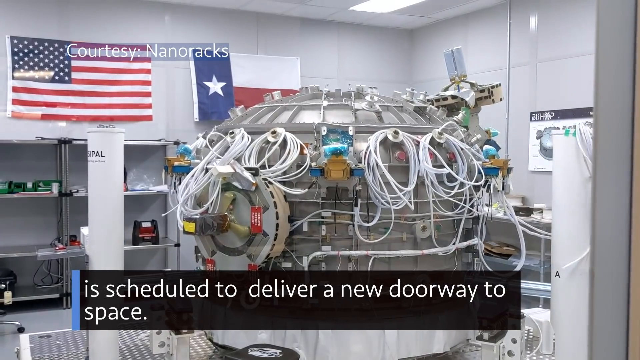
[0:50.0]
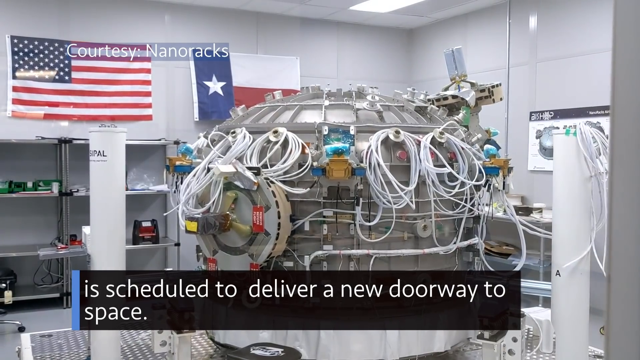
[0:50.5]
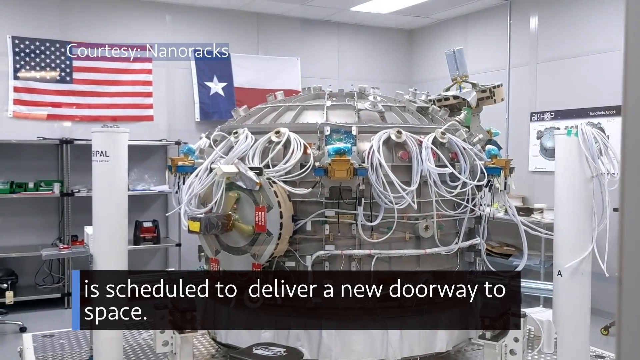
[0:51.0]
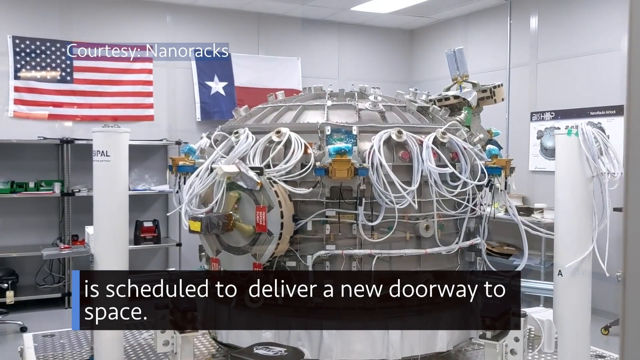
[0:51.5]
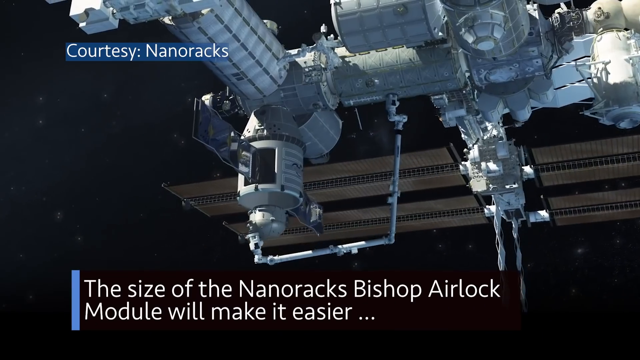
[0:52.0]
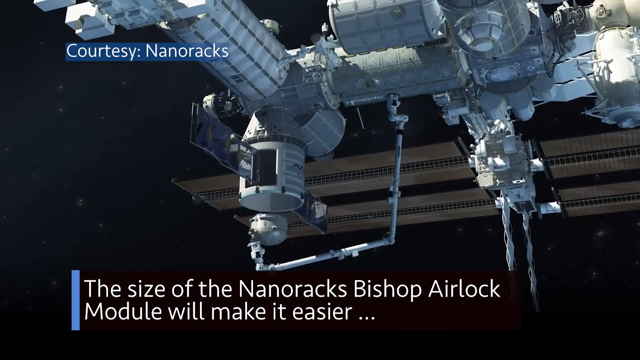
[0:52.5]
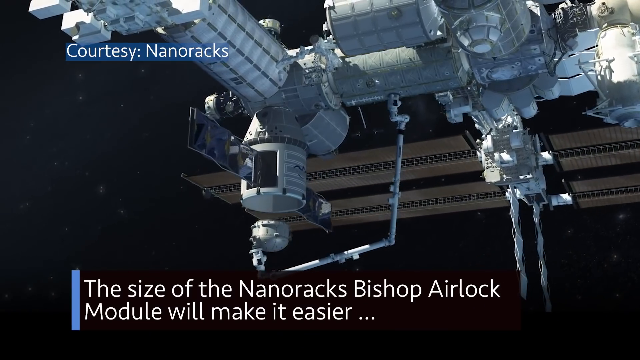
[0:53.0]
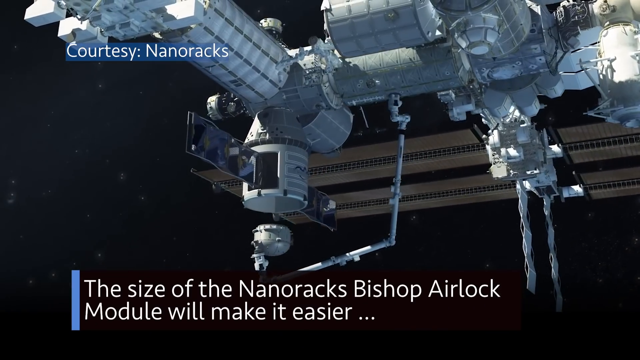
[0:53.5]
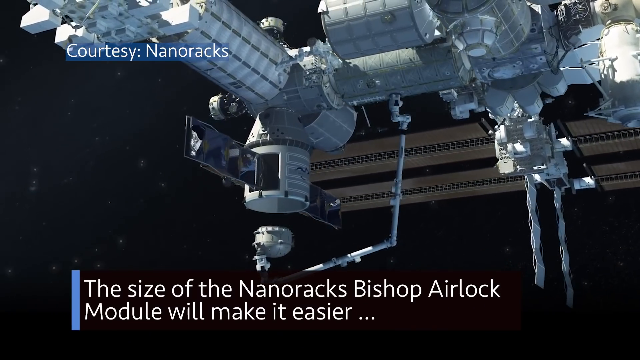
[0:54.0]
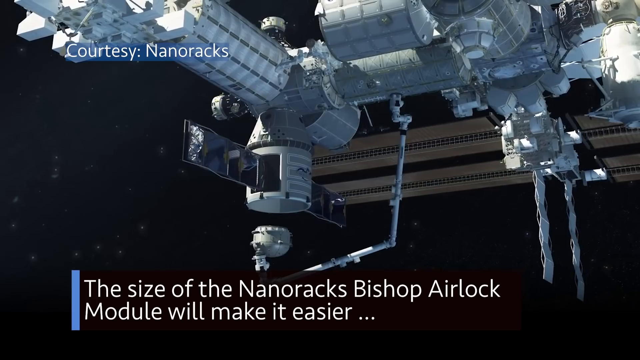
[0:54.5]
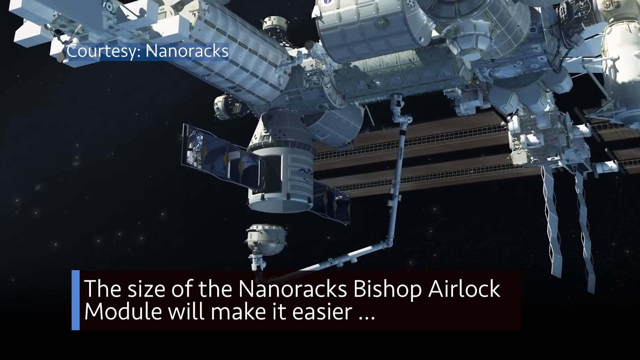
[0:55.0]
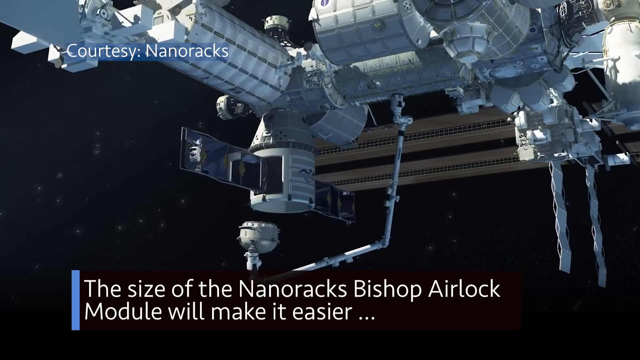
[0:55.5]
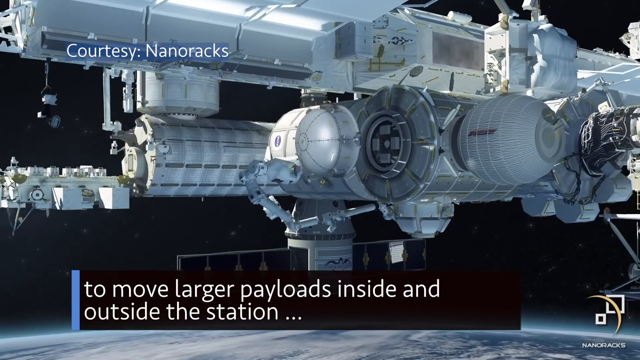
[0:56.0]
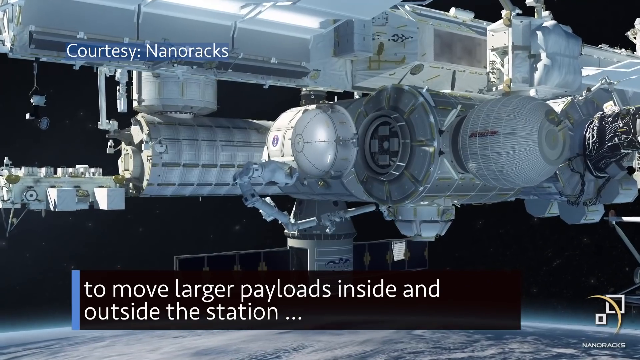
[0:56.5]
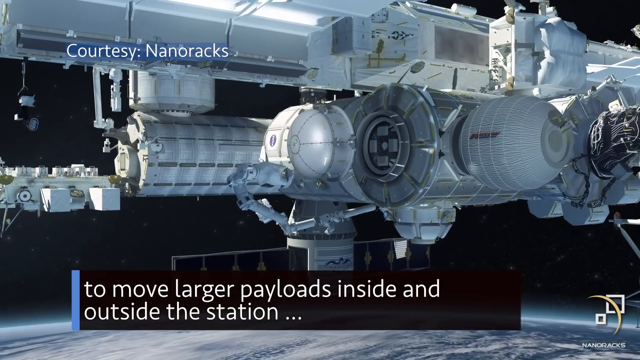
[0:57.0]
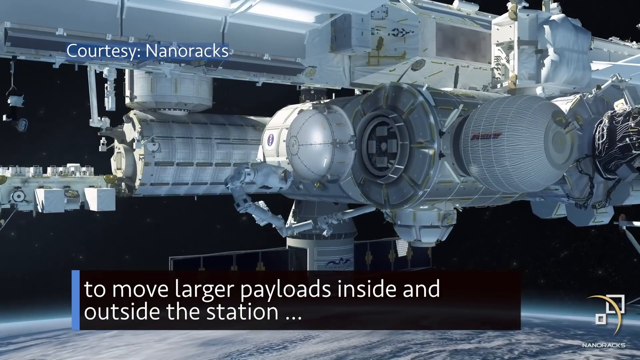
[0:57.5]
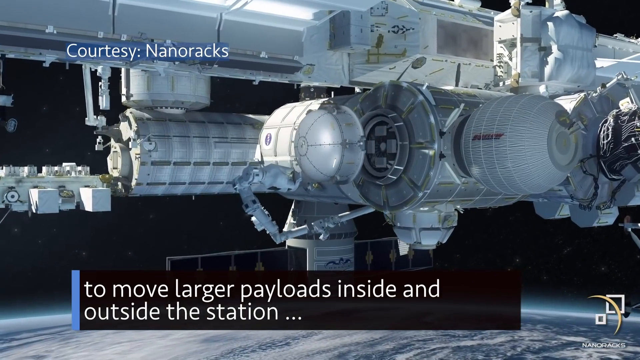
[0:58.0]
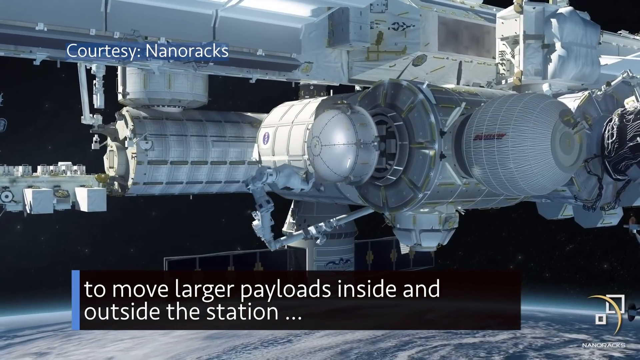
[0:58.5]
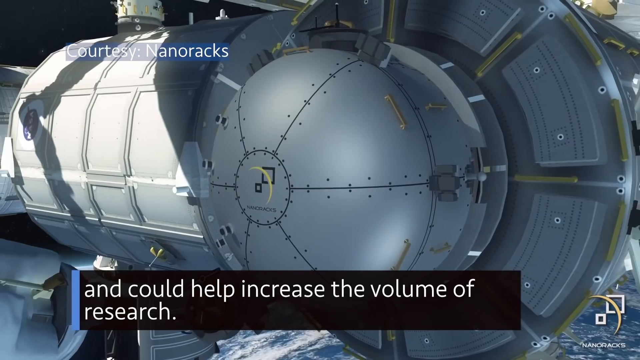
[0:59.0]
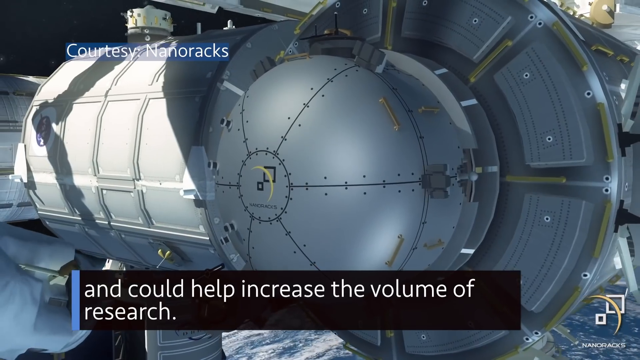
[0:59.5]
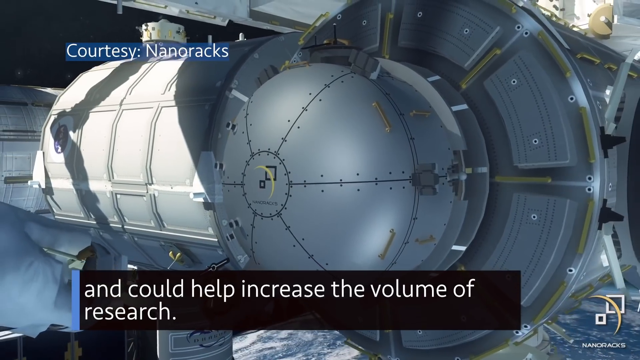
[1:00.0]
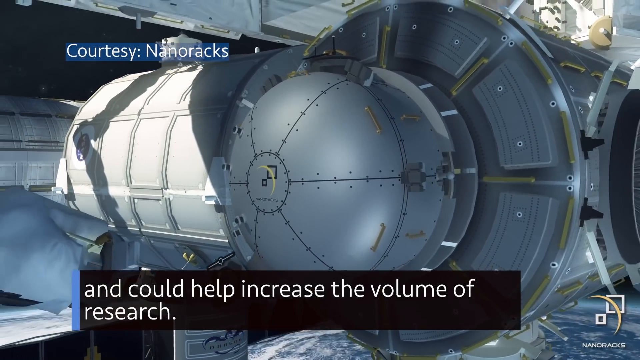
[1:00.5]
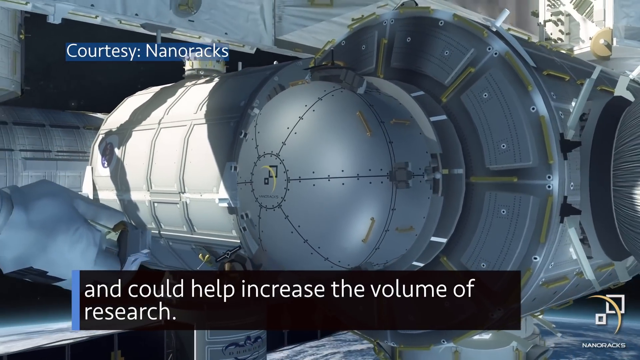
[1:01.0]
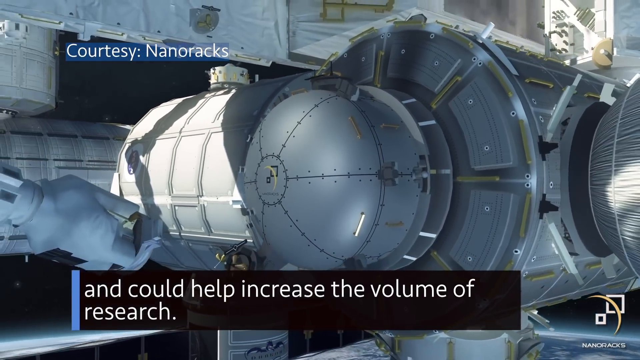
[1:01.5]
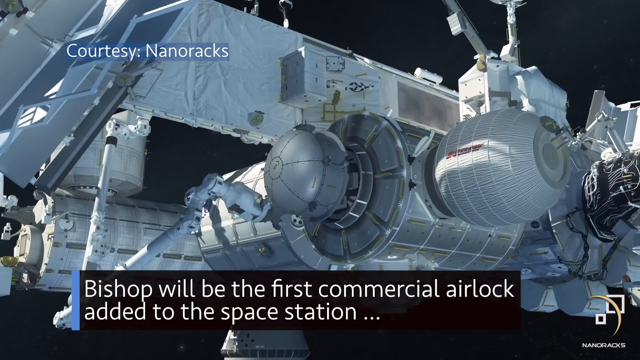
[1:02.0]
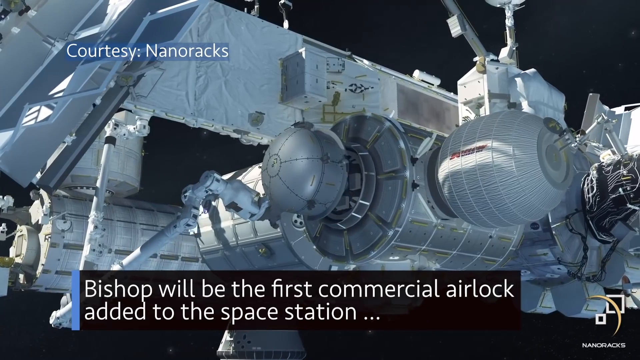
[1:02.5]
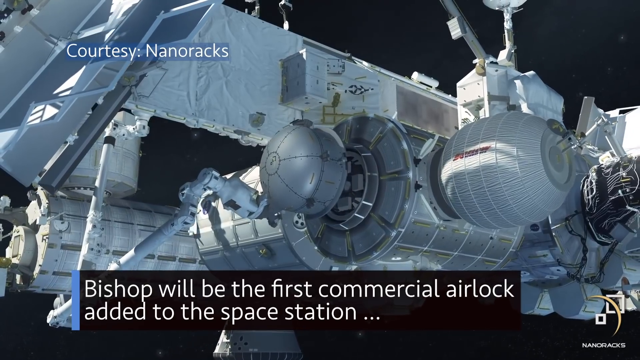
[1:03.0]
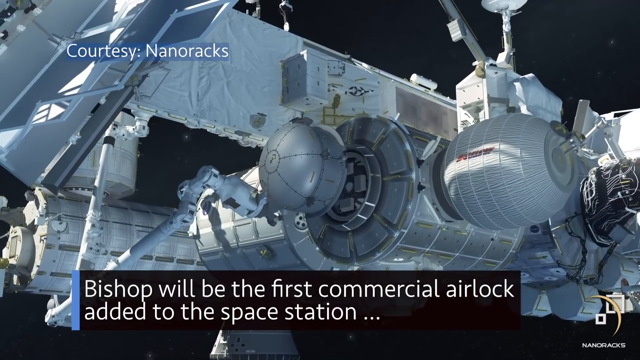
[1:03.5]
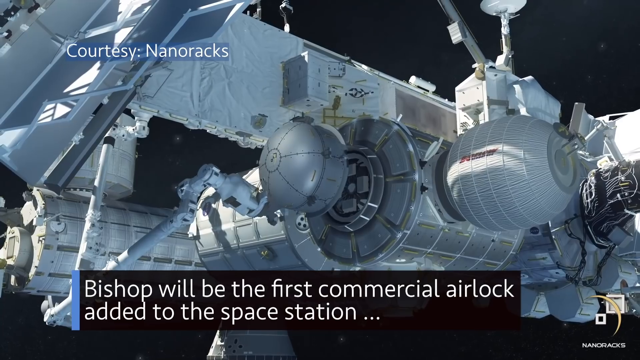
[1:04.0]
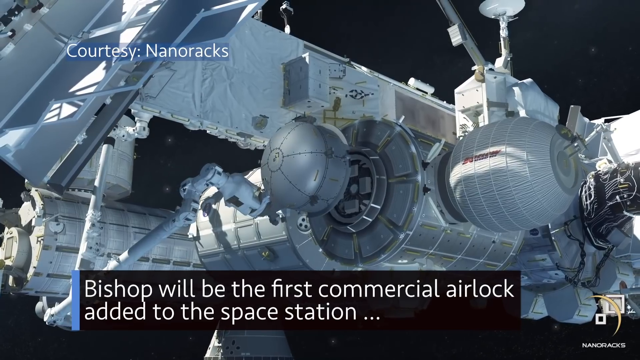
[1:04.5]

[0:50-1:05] On-screen text reads "it's scheduled to deliver a new airlock, the size of the NanoRacks Bishop airlock module will make it easier to move larger payloads inside and outside the station and could help increase the volume of research. This will be the first commercial airlock added to the space station." The first picture is an intense-looking piece of equipment that looks like the base of a rocket, though it is probably the airlock. The view then goes outside the space station, where an airlock is already in place, and apparently in a demonstration the cover is taken off the airlock and put back.